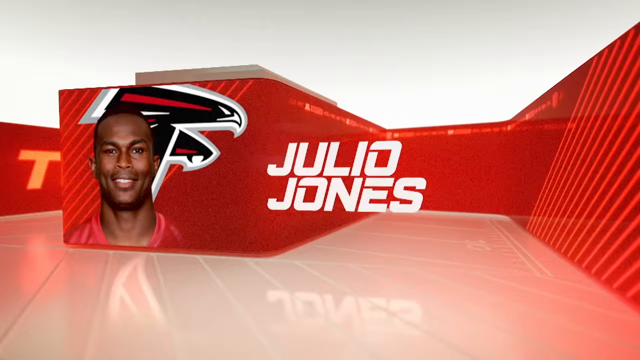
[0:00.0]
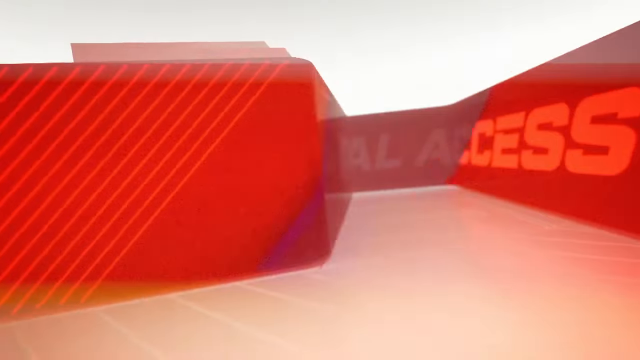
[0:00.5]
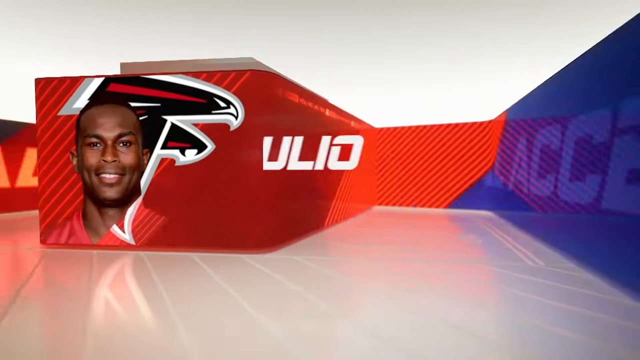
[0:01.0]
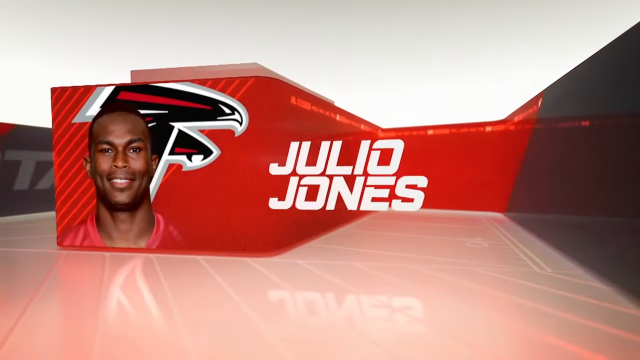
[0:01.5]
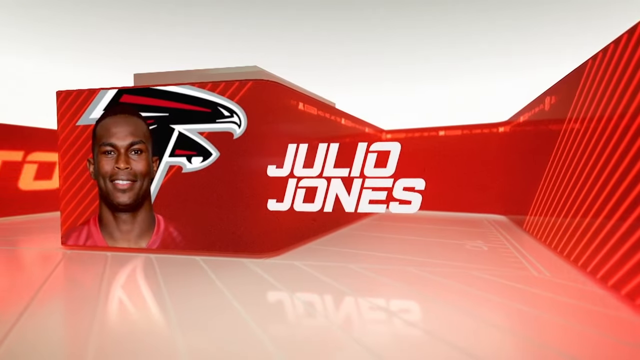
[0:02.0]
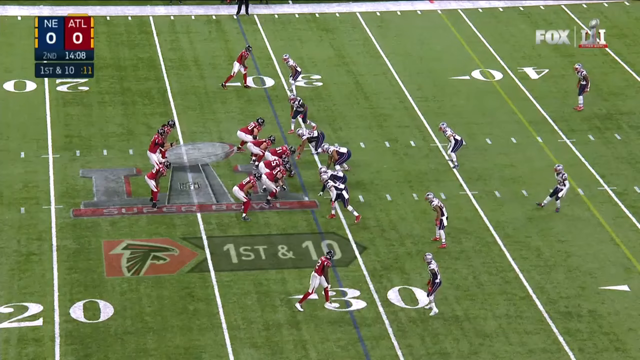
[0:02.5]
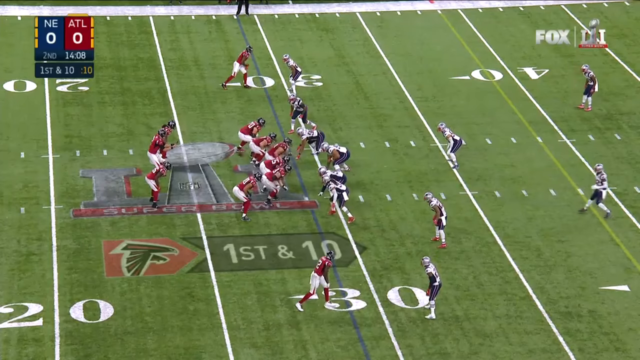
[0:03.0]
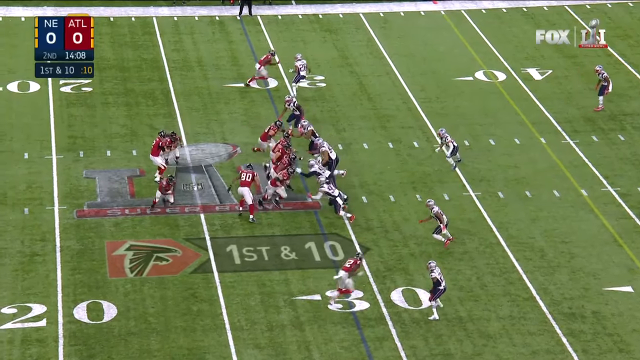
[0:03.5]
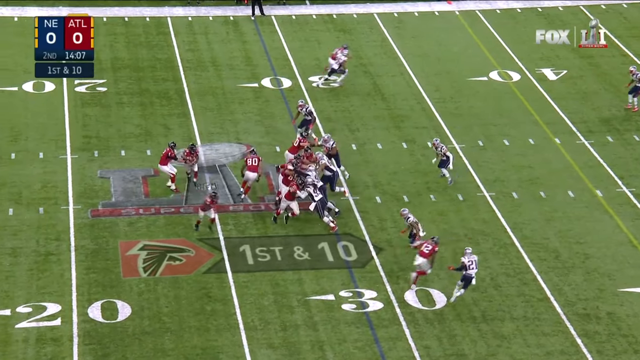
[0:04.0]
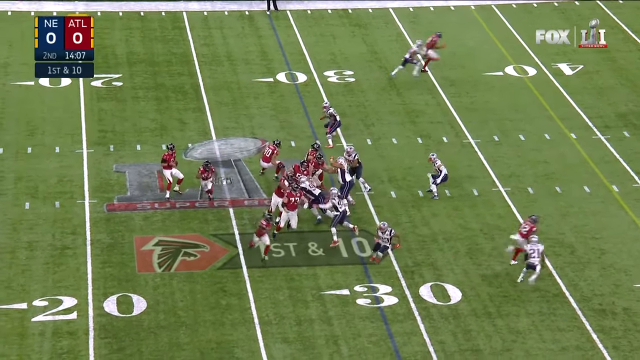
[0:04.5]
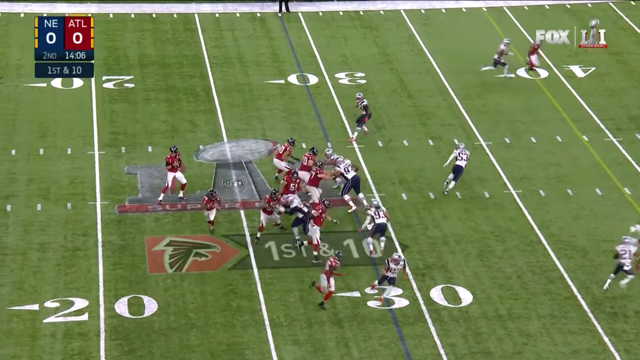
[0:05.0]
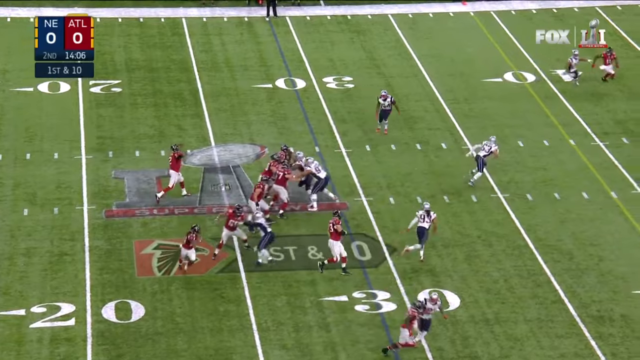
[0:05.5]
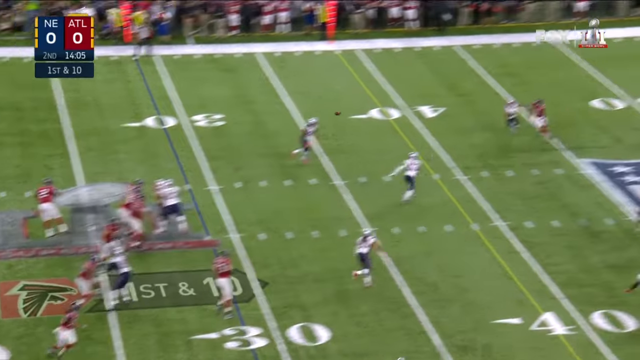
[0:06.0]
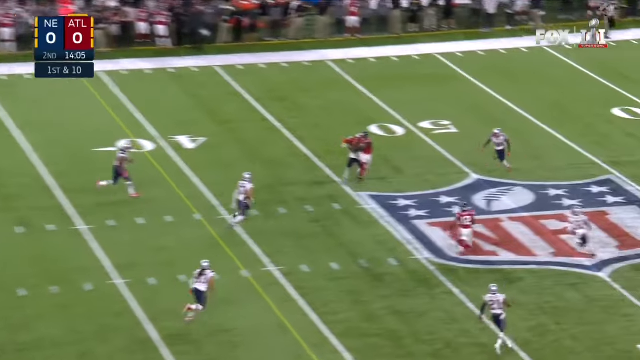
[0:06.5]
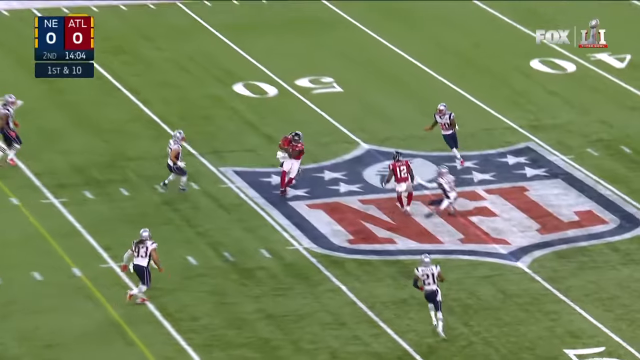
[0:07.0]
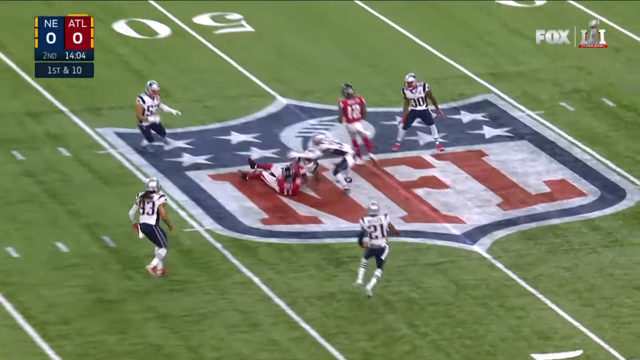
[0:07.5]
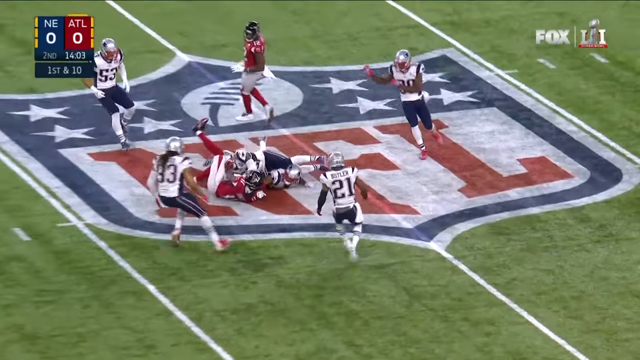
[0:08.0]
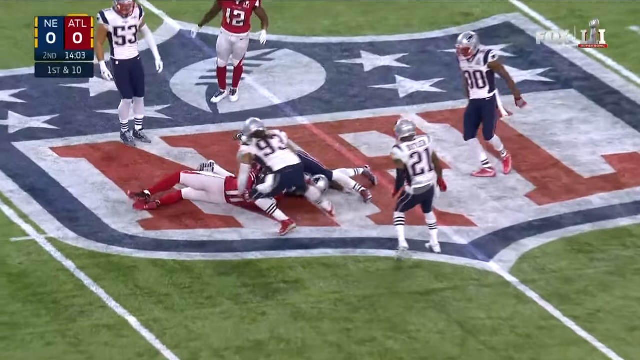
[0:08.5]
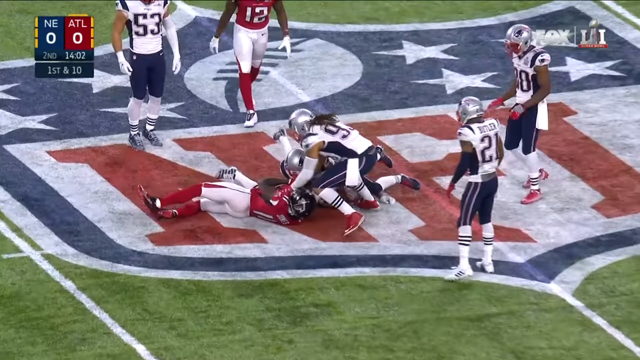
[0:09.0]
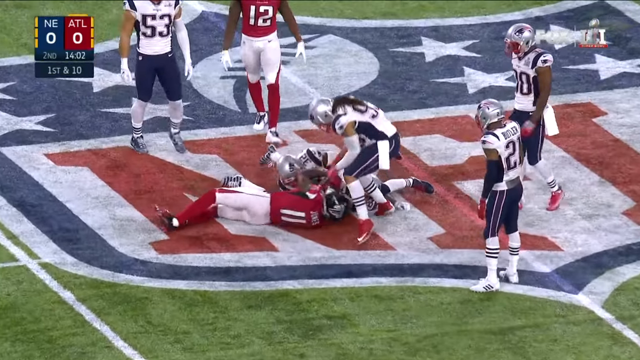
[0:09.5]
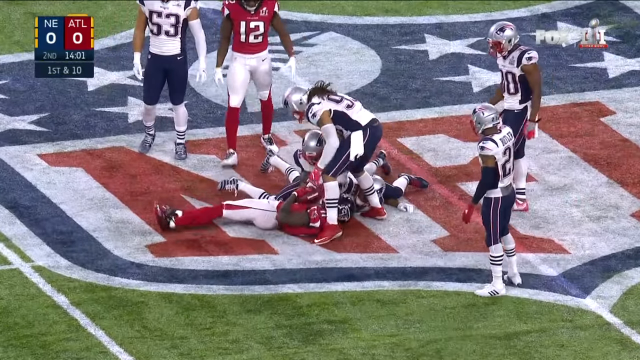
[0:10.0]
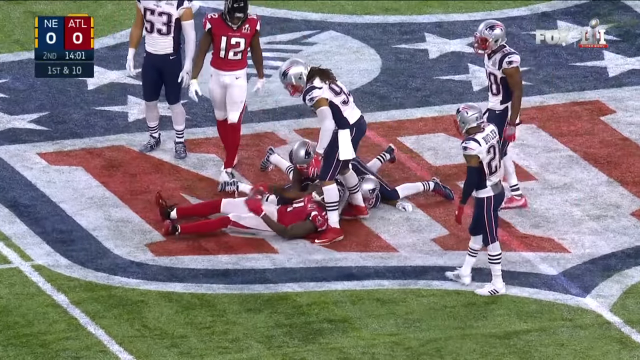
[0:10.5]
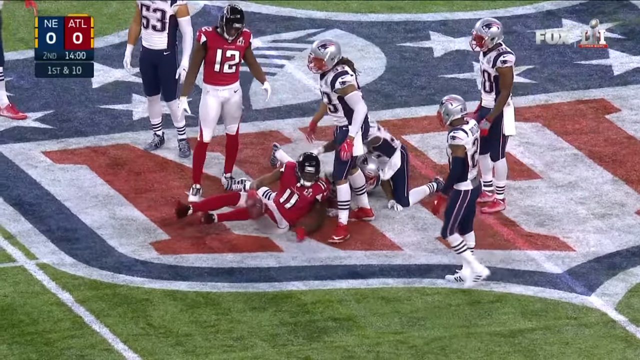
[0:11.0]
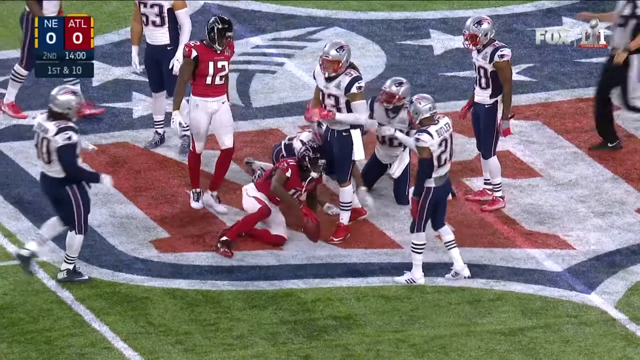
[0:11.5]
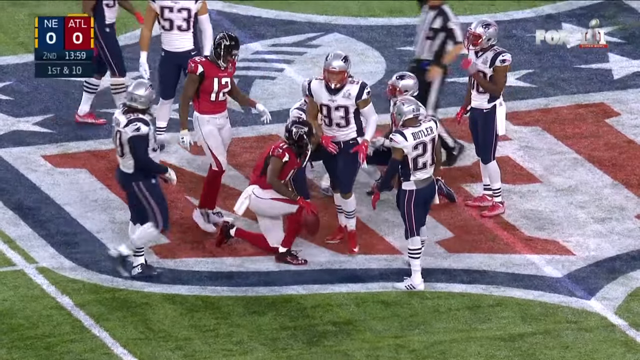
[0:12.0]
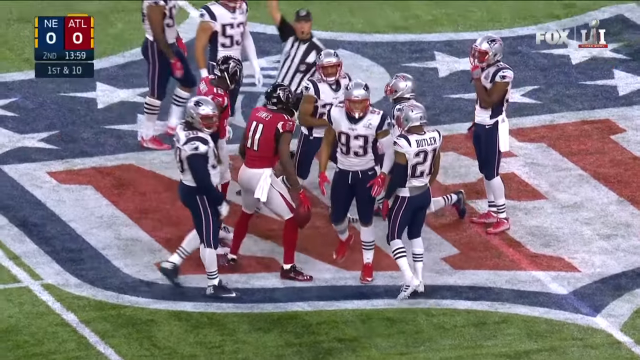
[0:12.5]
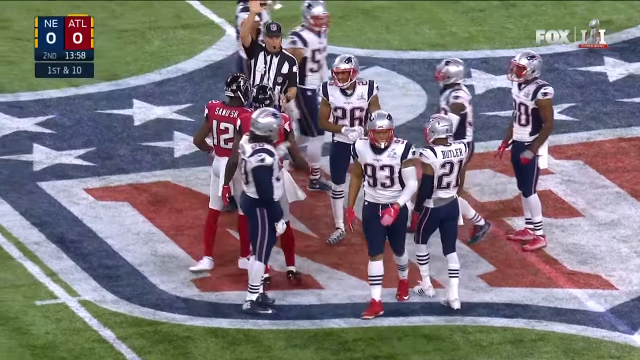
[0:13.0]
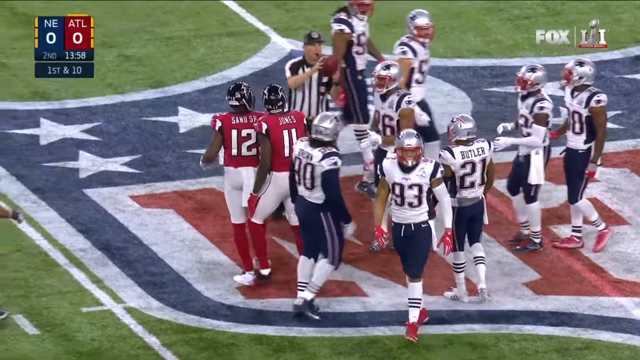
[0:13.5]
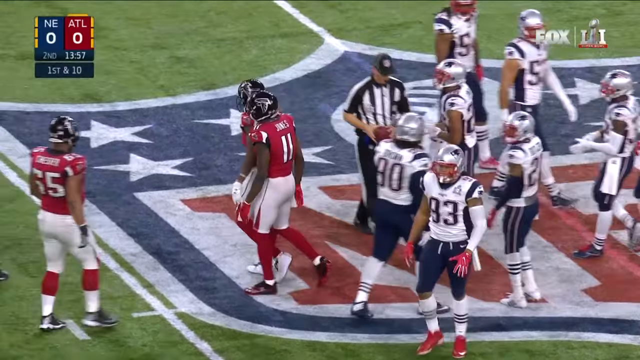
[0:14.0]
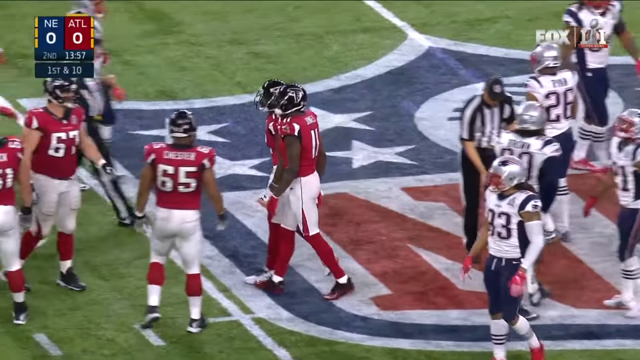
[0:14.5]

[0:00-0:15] The video opens with a banner for athlete Julio Jones. His name, "Julio Jones," appears in white text, and on the left side is an image of Julio Jones's face with the Atlanta Falcons logo behind him. The banner is mostly red with some black, and the background above it is light gray. The camera angle quickly changes to a game between the Atlanta Falcons and the New England Patriots. The first play is first and ten in the second quarter with fourteen minutes and eight seconds to go, and both teams have zeroes shown in the top left corner. The Falcons are on the left side and the Patriots on the right, with Atlanta on offense. Falcons quarterback Matt Ryan takes the snap, fakes giving the ball to the running back, and looks downfield. He throws the ball to Julio Jones over the middle of the field toward the fifty-yard line, right on the NFL logo. A Patriots player tries to wrestle the ball from Julio Jones but fails, and Julio Jones gets up. A group of players is around him: two Falcons players, eight Patriots players and one referee, and more Falcons players begin to rejoice with their teammates.